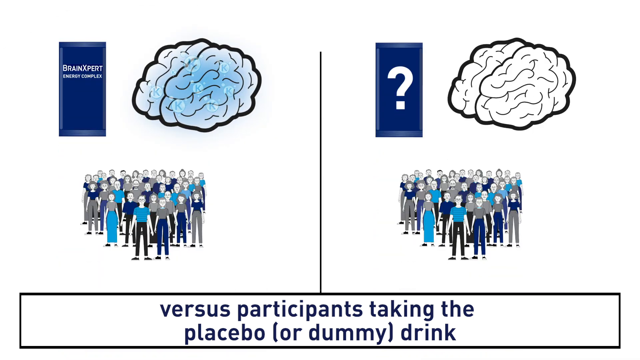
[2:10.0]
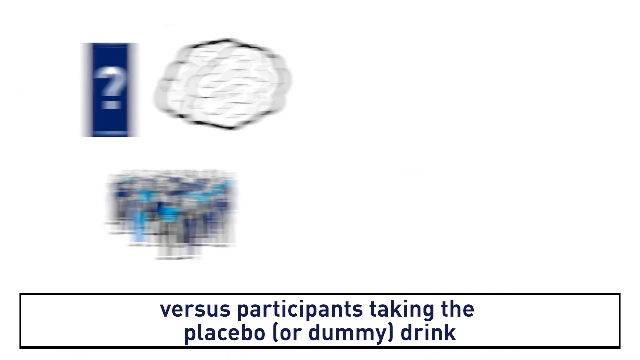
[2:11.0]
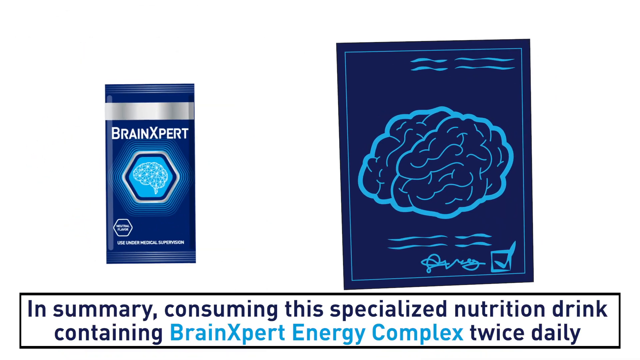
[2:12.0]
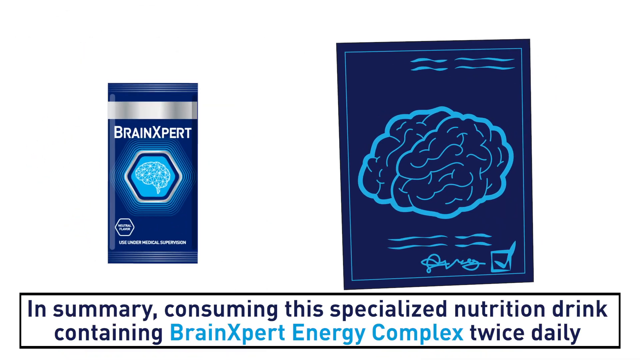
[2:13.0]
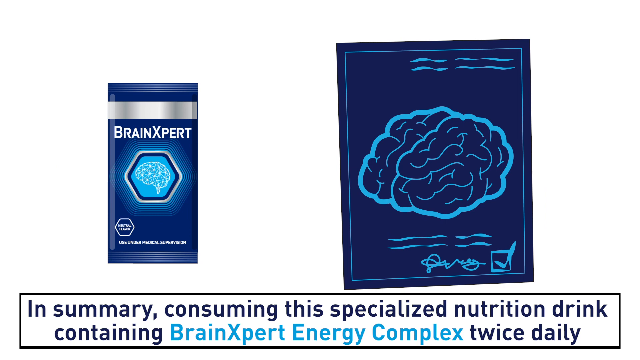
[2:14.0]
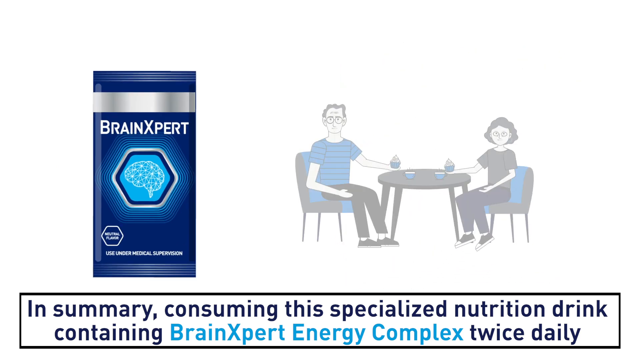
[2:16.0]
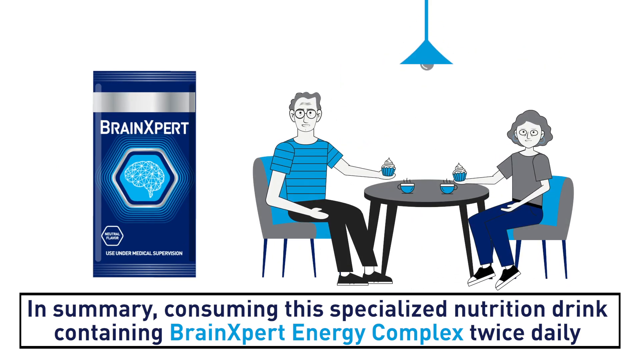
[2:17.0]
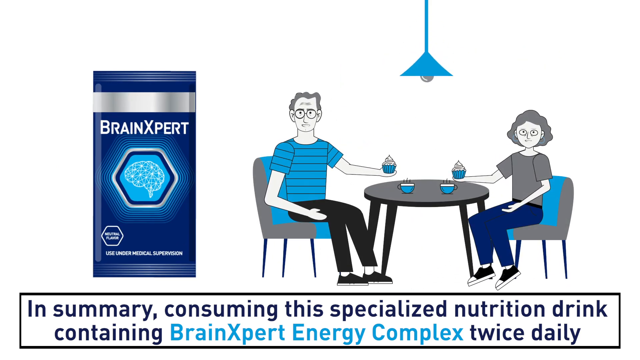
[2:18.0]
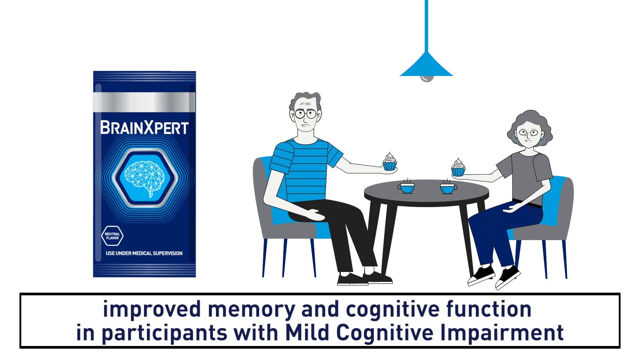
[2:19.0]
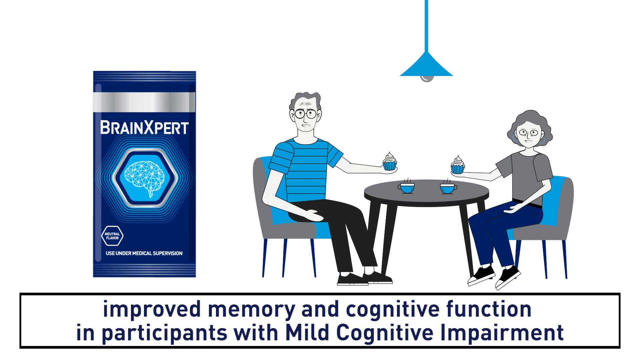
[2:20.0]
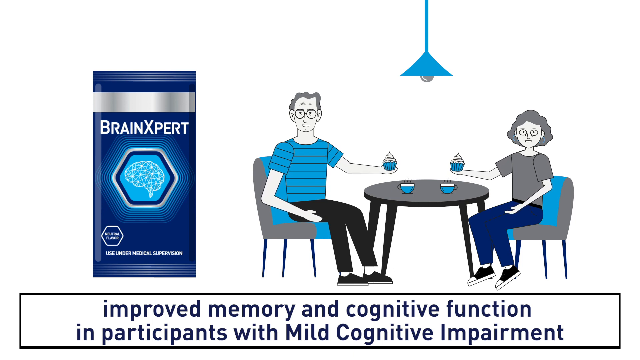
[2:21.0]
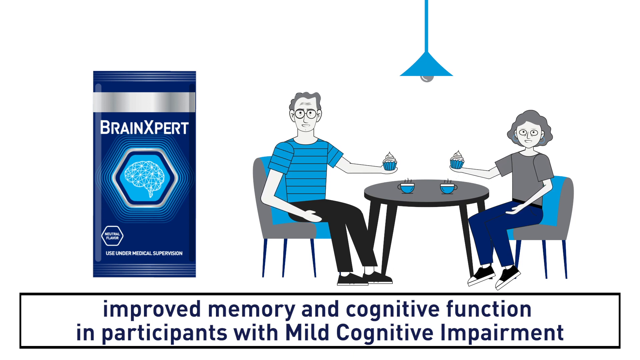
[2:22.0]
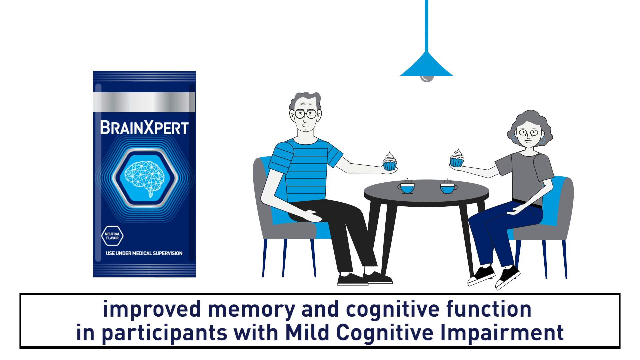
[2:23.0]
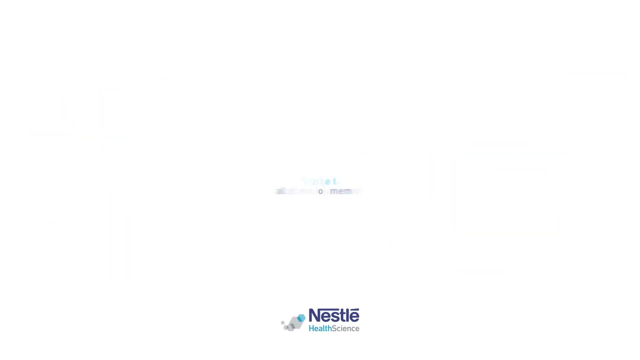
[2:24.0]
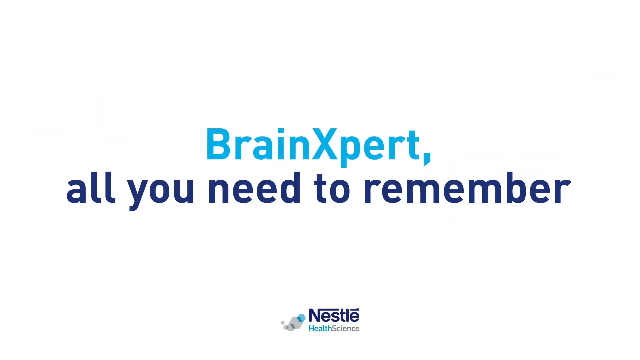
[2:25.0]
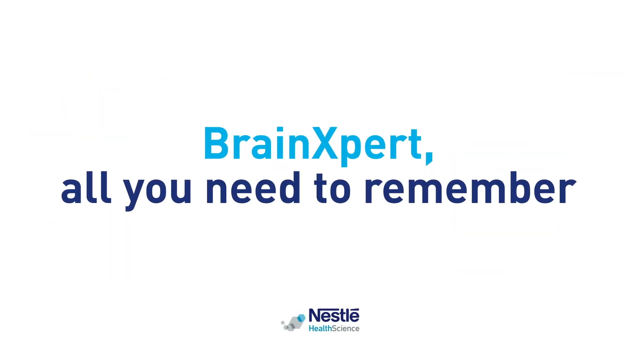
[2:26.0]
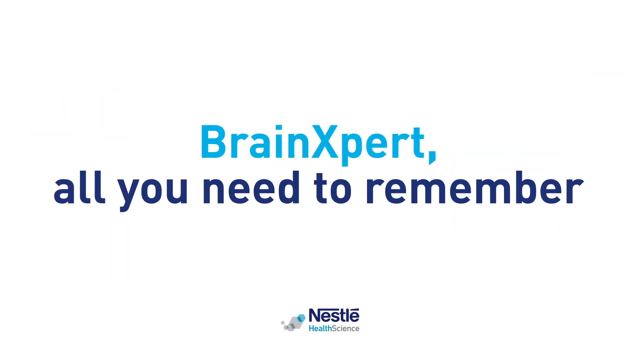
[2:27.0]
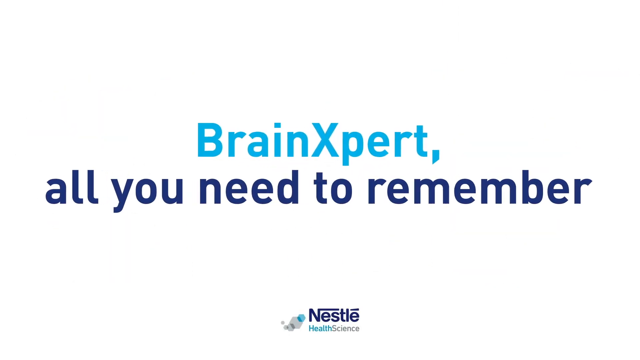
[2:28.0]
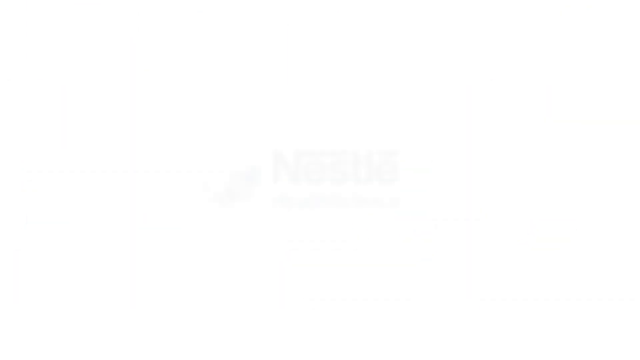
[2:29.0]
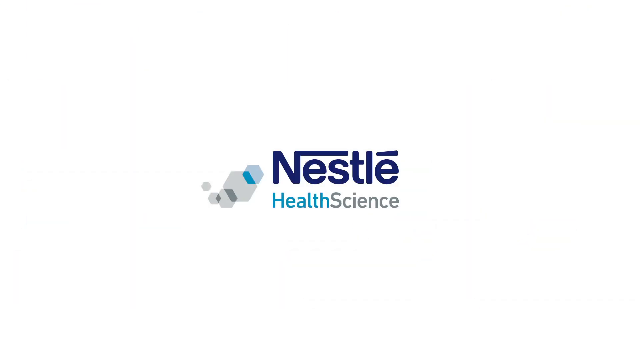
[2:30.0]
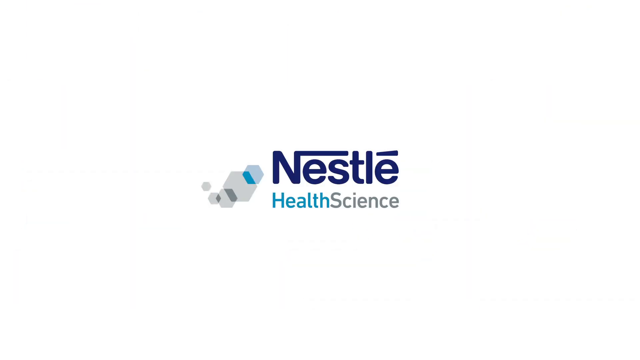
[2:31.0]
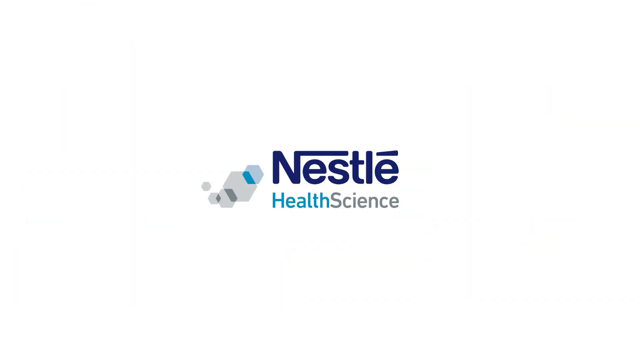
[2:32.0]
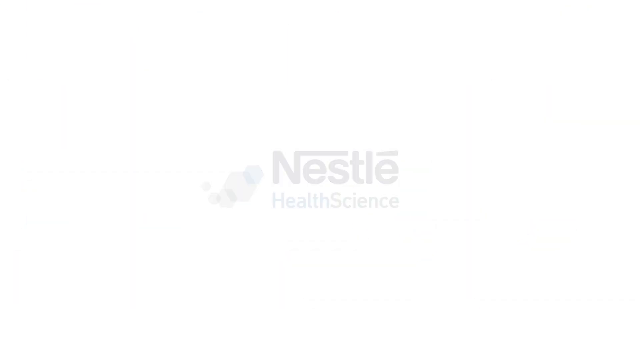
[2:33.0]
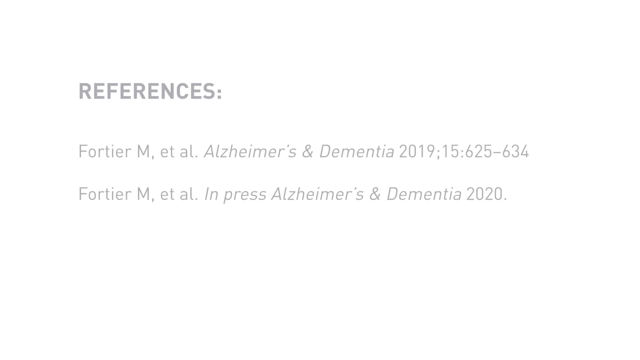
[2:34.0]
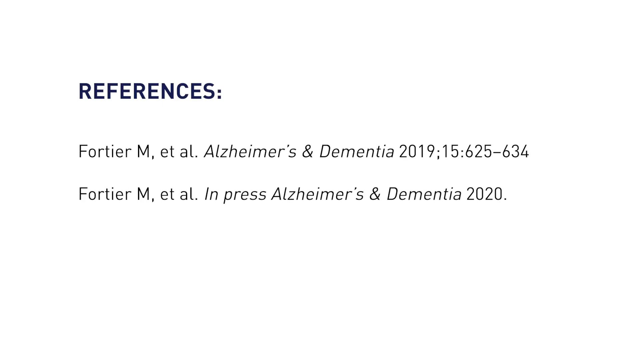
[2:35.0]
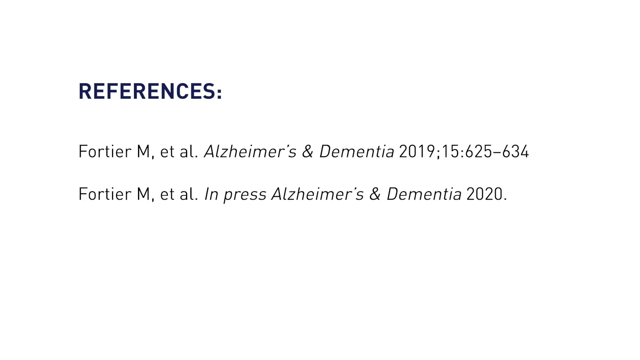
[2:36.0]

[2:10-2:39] Text at the bottom reads "versus participants taking the placebo or dummy drink", and the top shows two scenes. On the left is the Brain Expert energy complex drink and its effect on the brain, with Ks, or ketones, throughout the brain, which is colored blue, and a crowd below it. On the right is a blue rectangle with a question mark and a black-and-white image of the brain with no ketones and no change in color, above a different group of people. A summary follows, with the bottom text "In summary, consuming this specialized nutrition drink containing Brain Expert Energy Complex twice daily", the Brain Expert packaging at the top and an image of the brain on the right. That goes away, and a happy couple at home eat cupcakes and drink a hot beverage with steam rising from it. A blue lamp with a gray bulb hangs from the ceiling, and the male and female both sit at a round table in comfortable gray and blue chairs. The bottom text says "improved memory and cognitive function in participants with mild cognitive impairment". The final screen says "brain expert all you need to remember", with "Nestle Health Science" at the bottom.